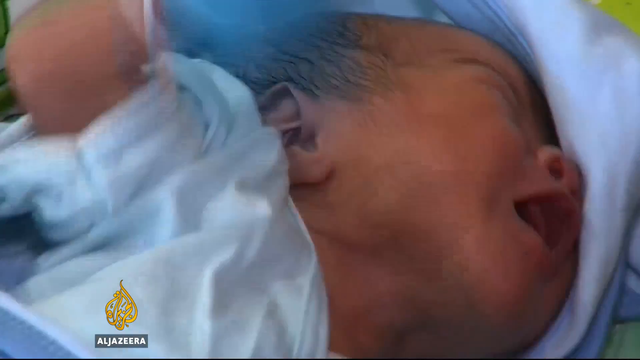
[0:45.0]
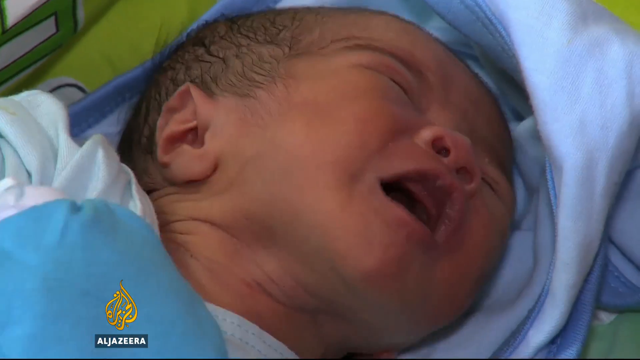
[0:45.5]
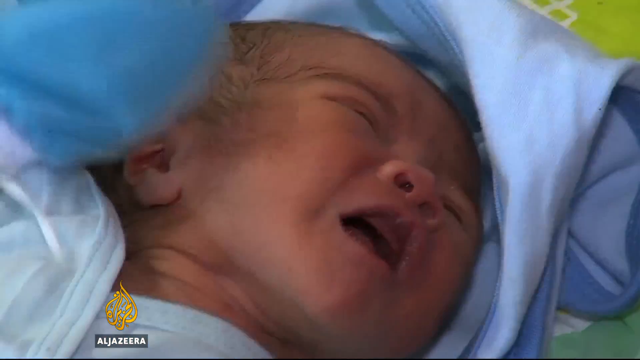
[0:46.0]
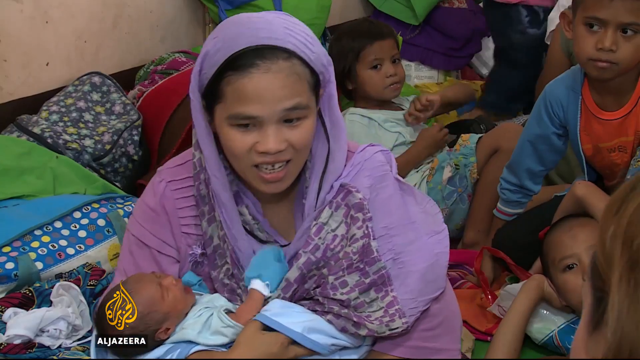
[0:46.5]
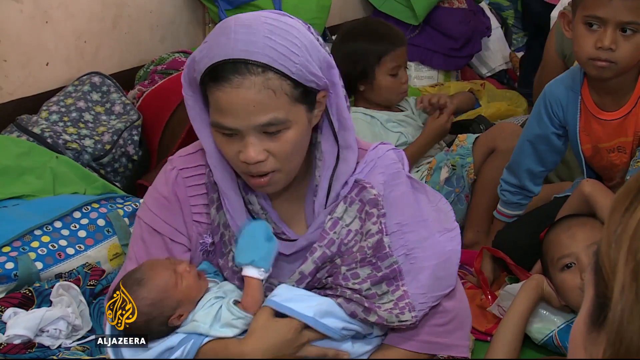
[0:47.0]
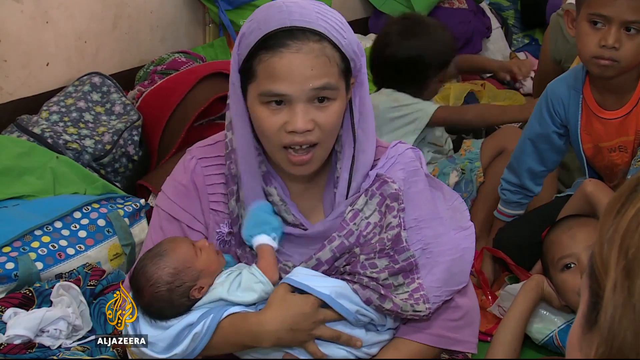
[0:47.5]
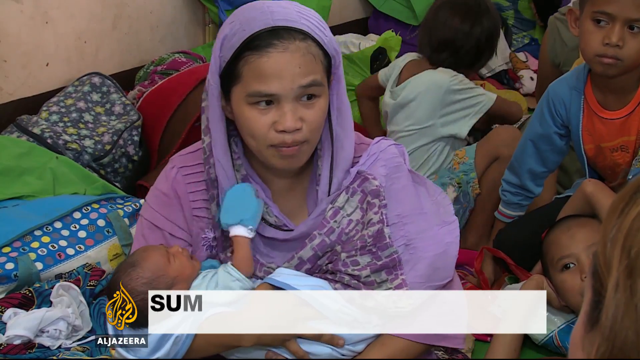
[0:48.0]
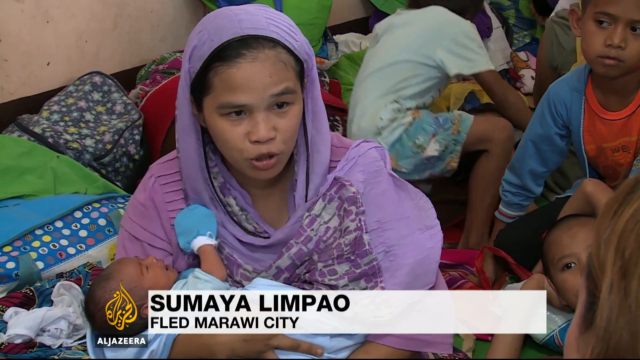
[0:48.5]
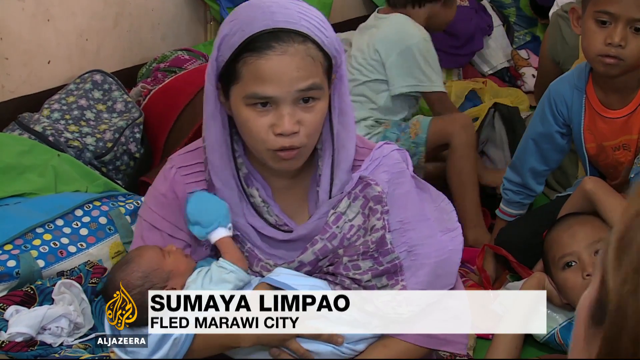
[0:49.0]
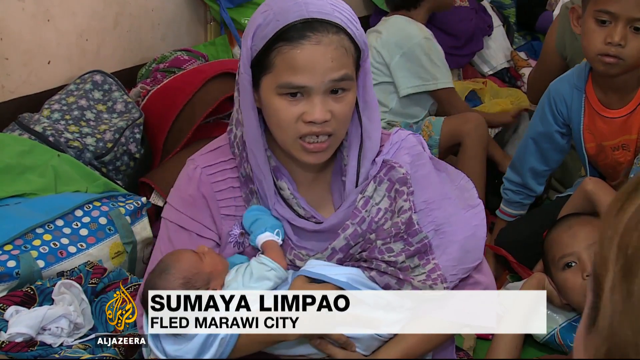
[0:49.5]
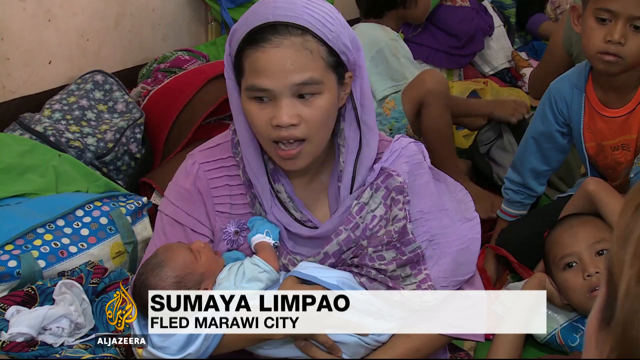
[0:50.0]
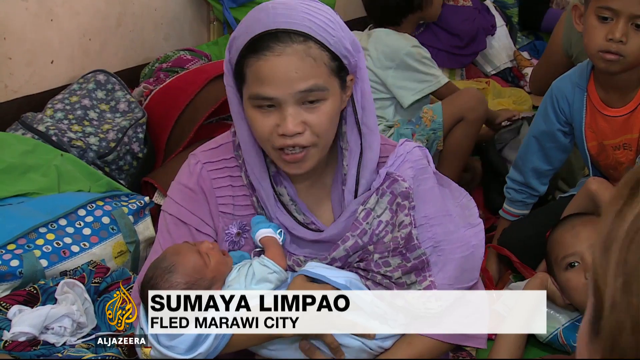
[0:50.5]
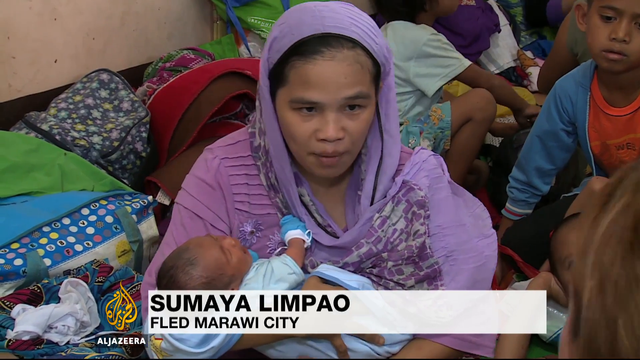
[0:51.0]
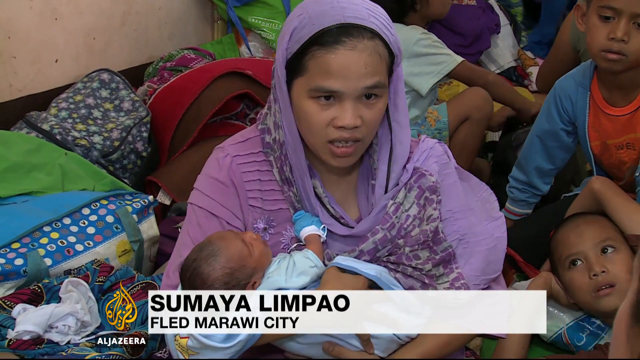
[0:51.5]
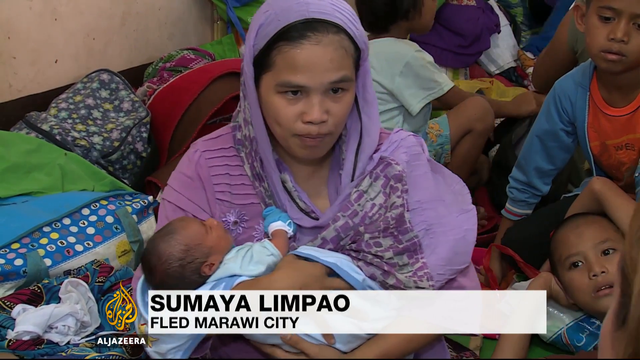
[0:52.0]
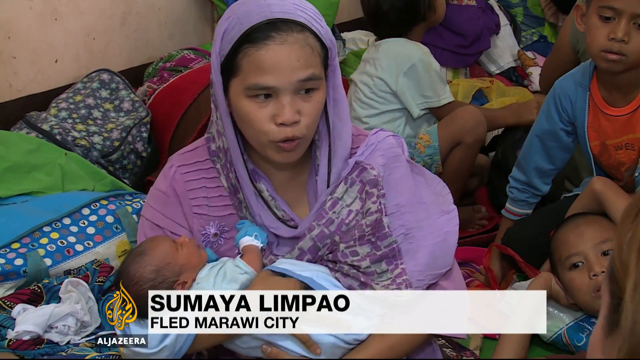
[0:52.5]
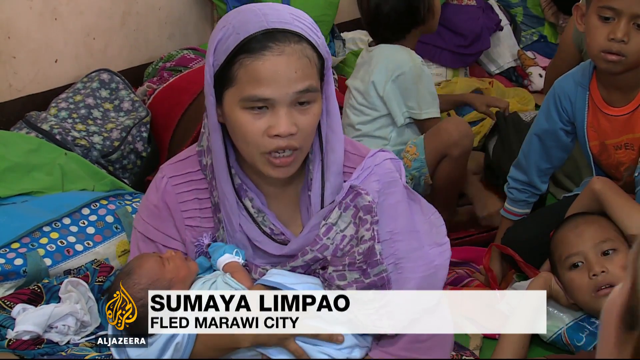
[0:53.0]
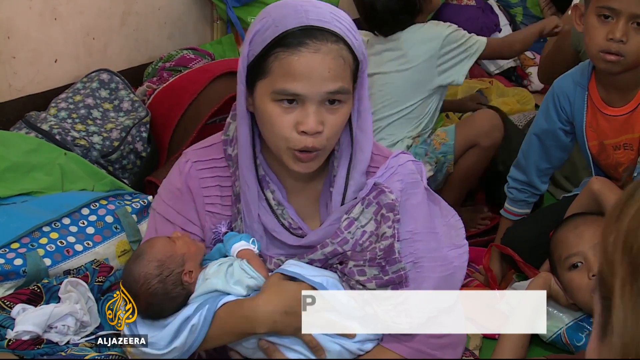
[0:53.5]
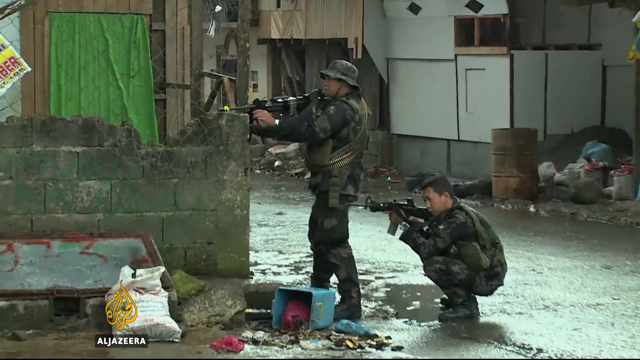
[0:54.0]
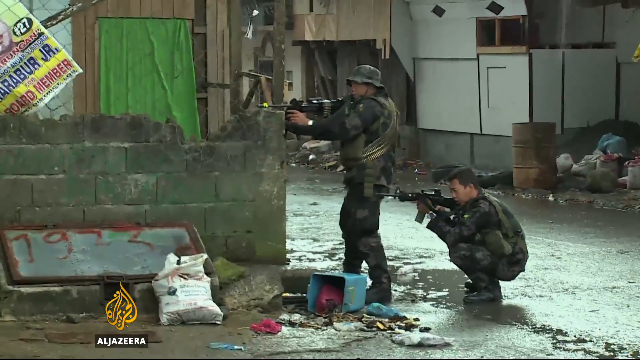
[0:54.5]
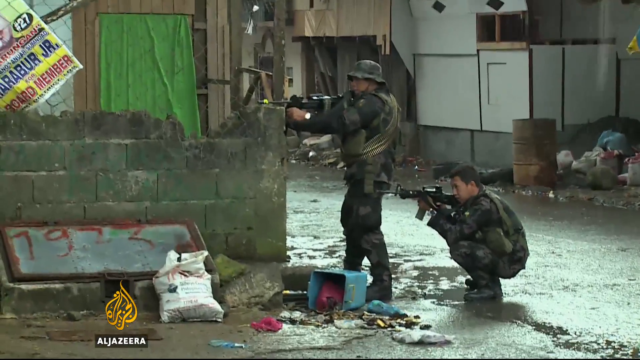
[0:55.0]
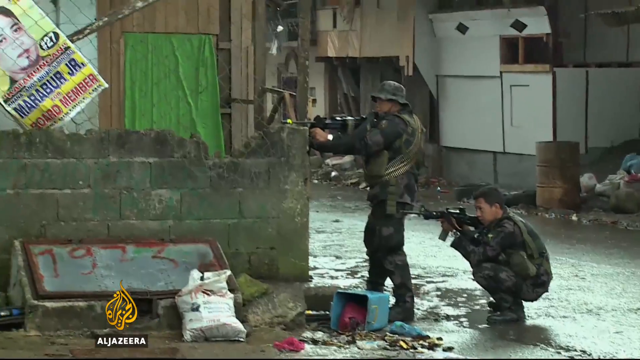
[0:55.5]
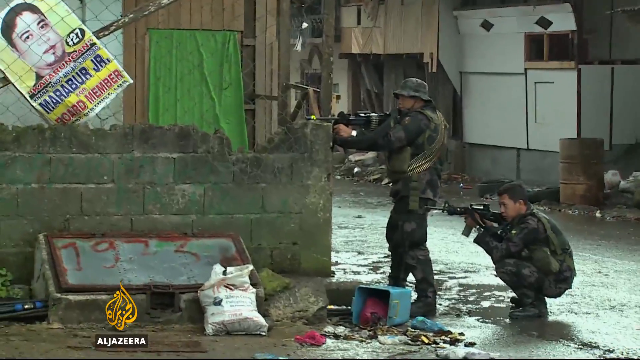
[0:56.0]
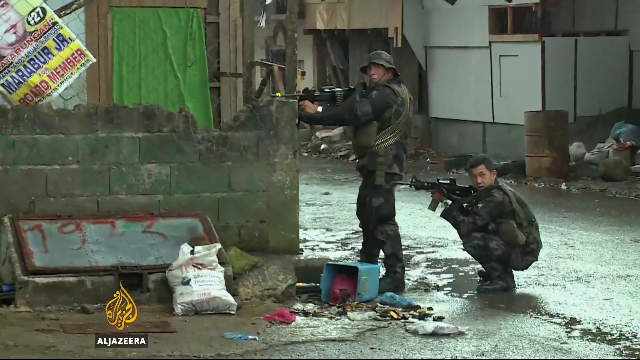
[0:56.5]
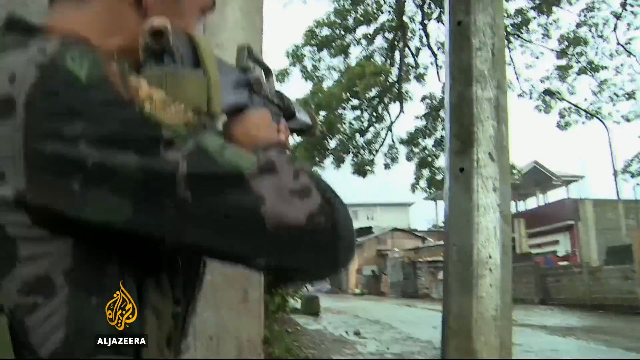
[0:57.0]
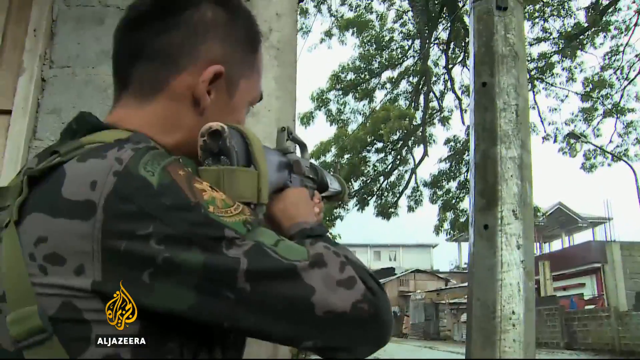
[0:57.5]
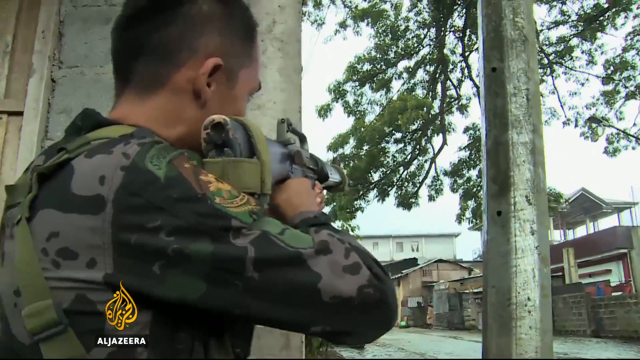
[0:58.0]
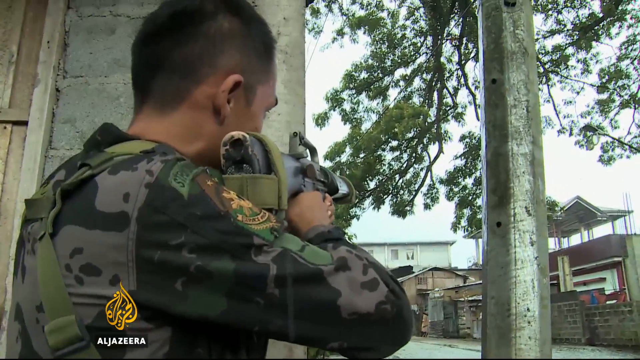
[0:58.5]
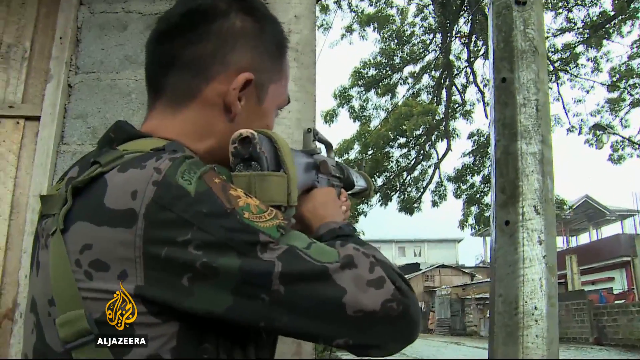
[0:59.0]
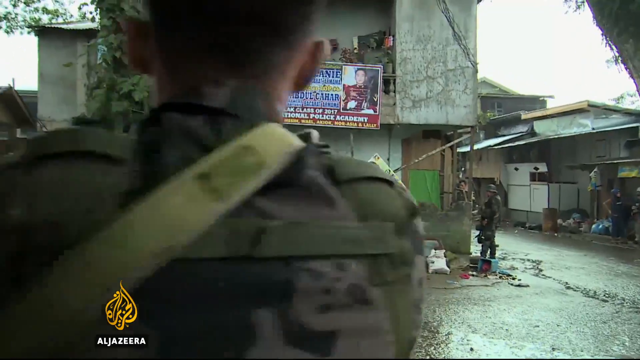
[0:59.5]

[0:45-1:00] More scenes of the women follow. One of them, holding a newborn, is interviewed and speaks to the interviewer, who is apparently the woman seen earlier. She is identified as Sumaya Limpau, who fled Marawi City. The women and children are in some kind of shelter, apparently a gym or public building. Then troops in camo gear, apparently Philippine national military, stand in the rain on street corners with weapons drawn; it is not clear what they are aiming at.